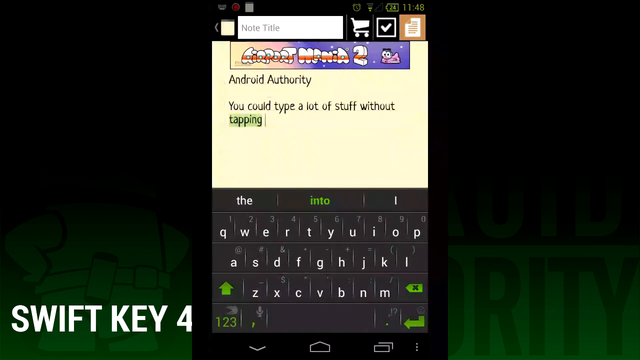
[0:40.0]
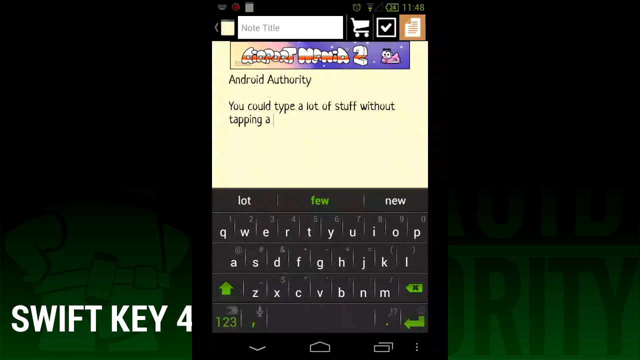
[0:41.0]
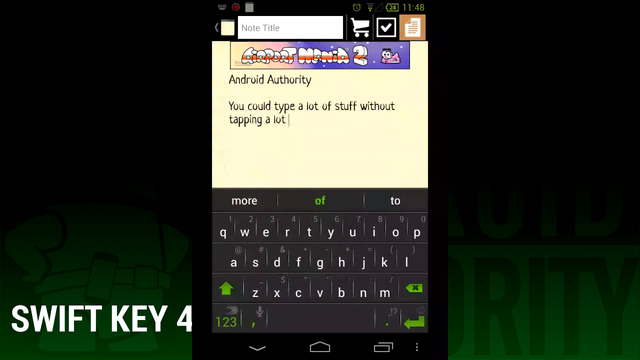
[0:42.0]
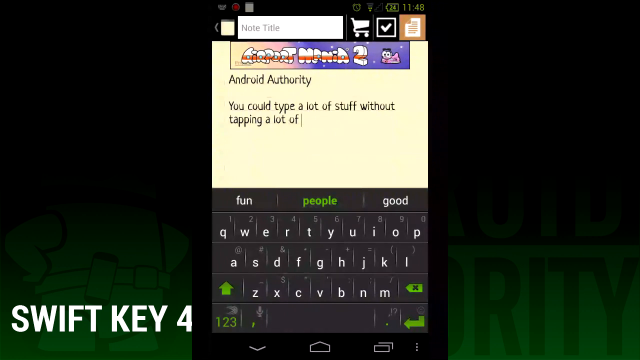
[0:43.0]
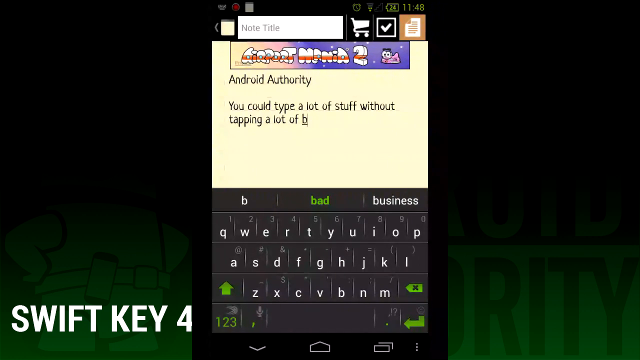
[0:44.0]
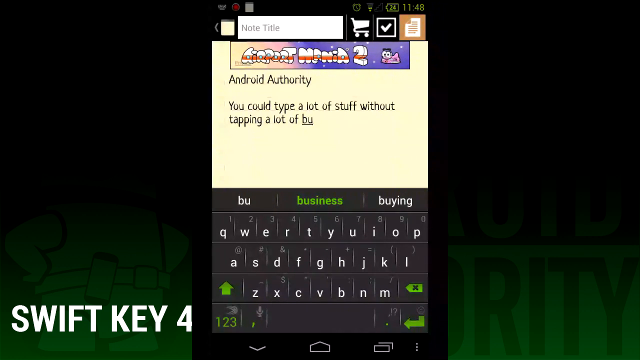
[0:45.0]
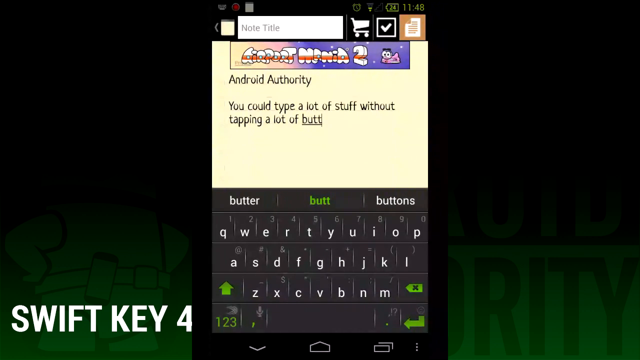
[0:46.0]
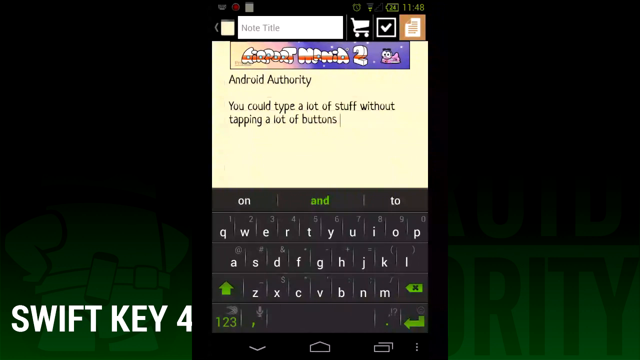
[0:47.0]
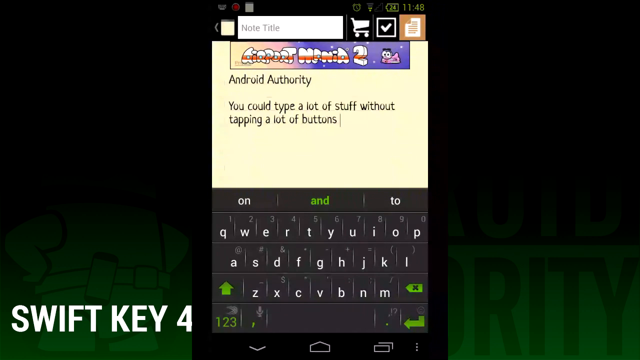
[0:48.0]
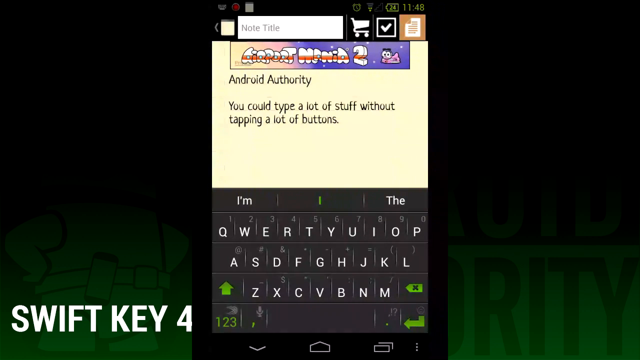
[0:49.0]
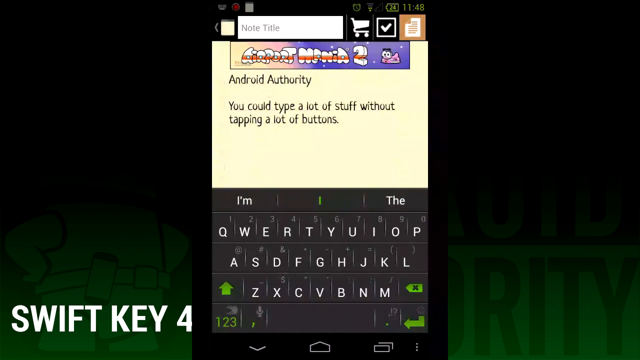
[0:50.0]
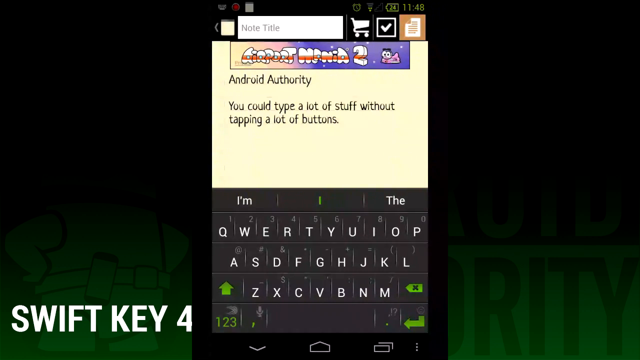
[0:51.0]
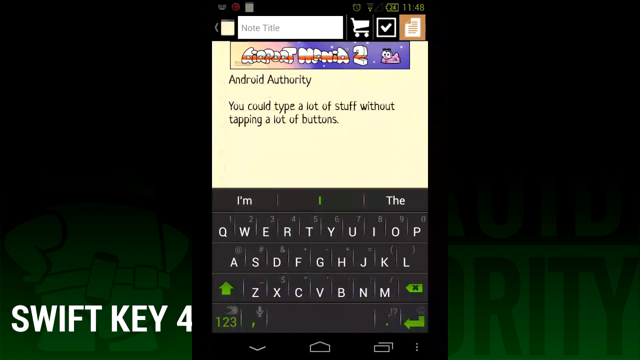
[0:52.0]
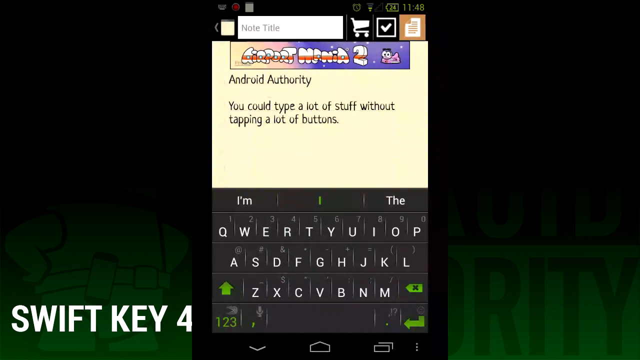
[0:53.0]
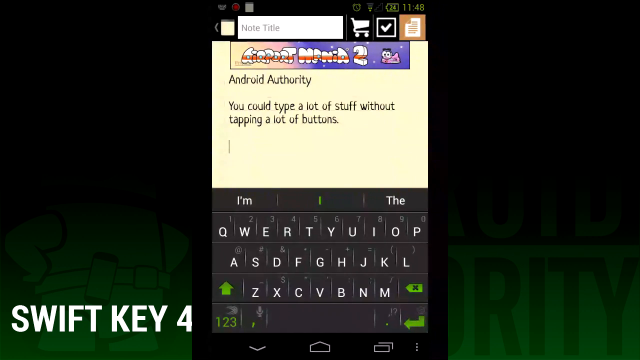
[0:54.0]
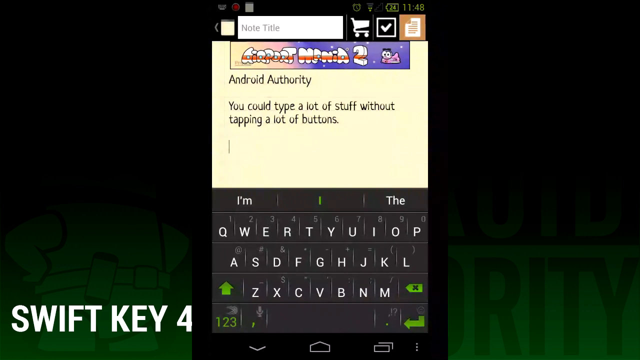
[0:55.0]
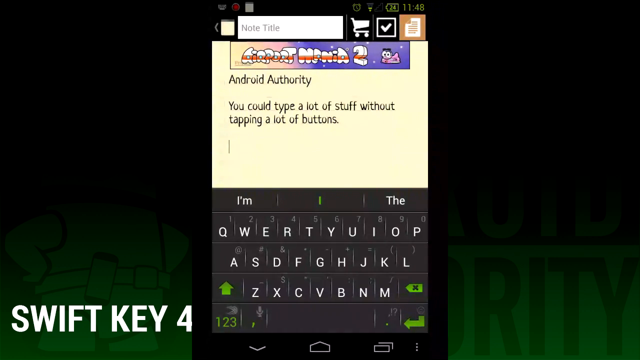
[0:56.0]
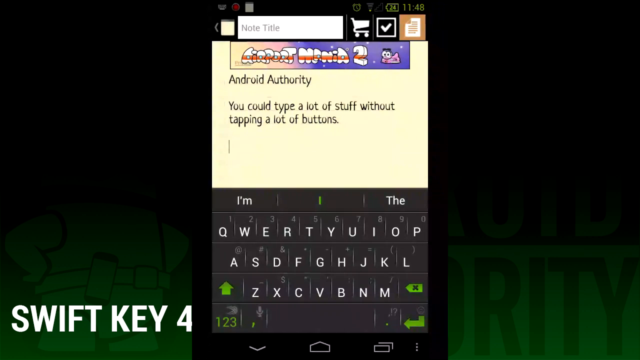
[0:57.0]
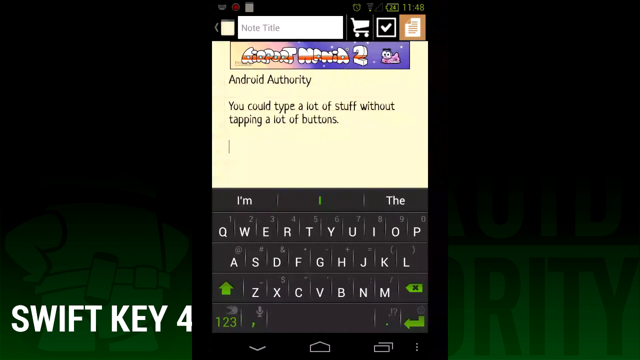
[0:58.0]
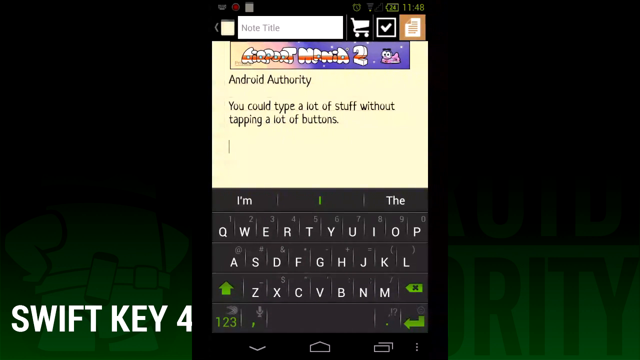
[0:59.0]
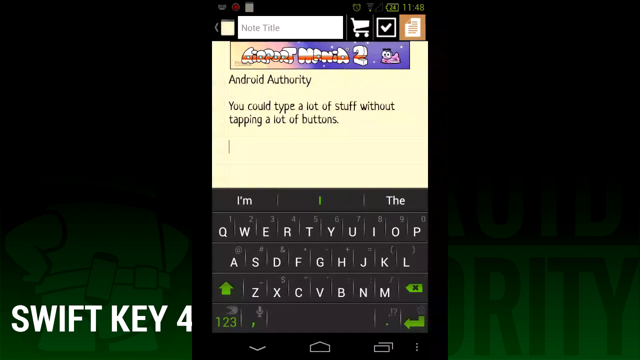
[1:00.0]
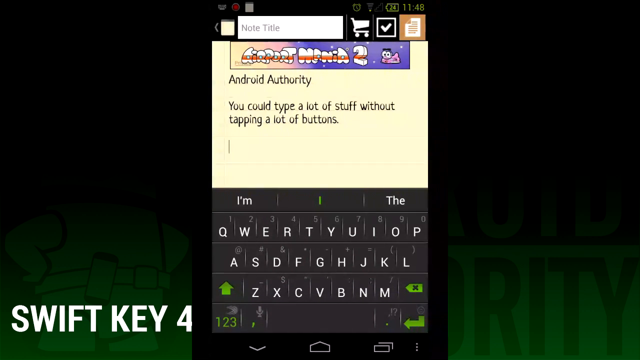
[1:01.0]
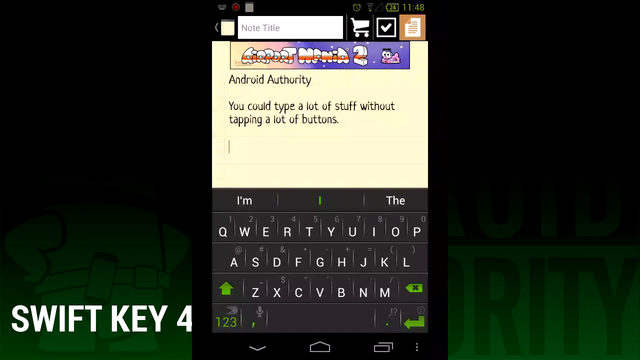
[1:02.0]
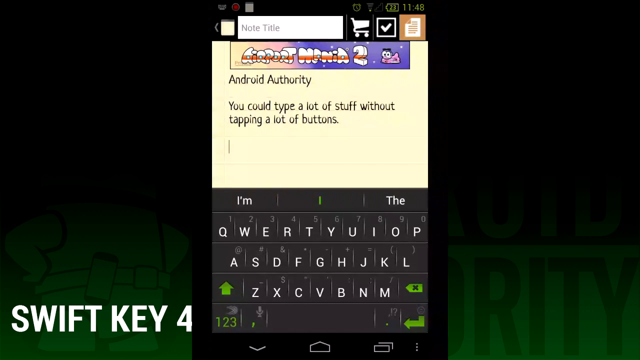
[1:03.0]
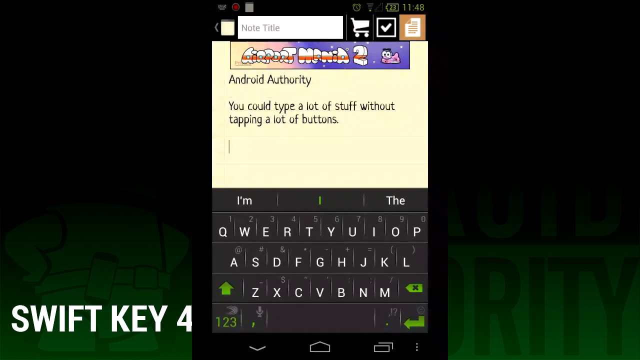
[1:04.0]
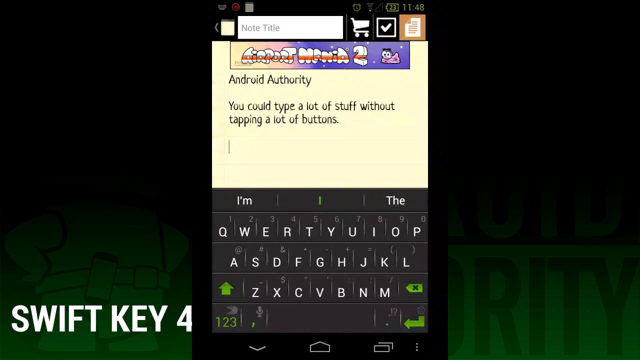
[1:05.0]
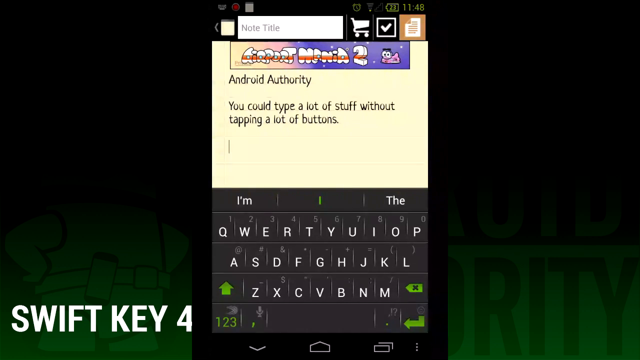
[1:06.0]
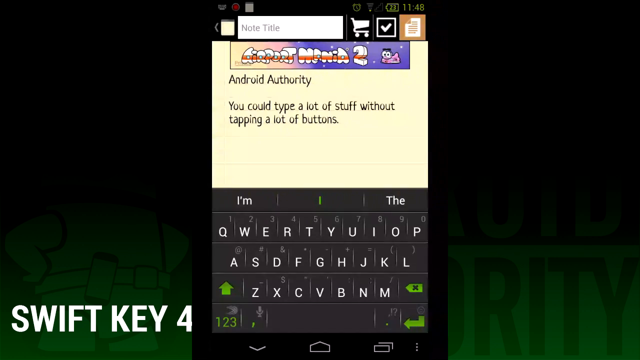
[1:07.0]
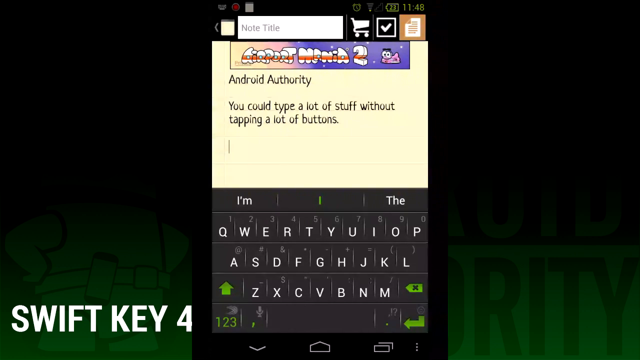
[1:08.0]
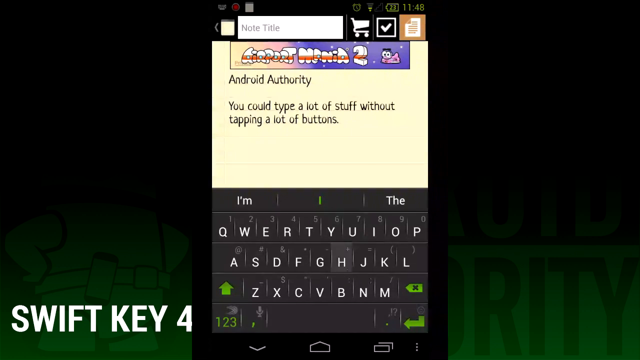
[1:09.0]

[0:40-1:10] The phone screen shows "Android Authority" and "You could type a lot of stuff without tapping", with "tap" highlighted in green, apparently as auto-complete suggesting the rest of the sentence. Then the word "buttoned" appears. "Swift Key 4" is in the lower left-hand corner. The keyboard looks like a real phone keyboard: the top row reads Q-W-E-R-T-Y-U-I-O-P, the next row A-S-T-F-G-H-J-K-L, the next row has a green up arrow, the white letters Z-X-C-V-B-N-M and another green arrow. It looks like typing might continue, but for now there is only blinking. Then the word "here" appears.